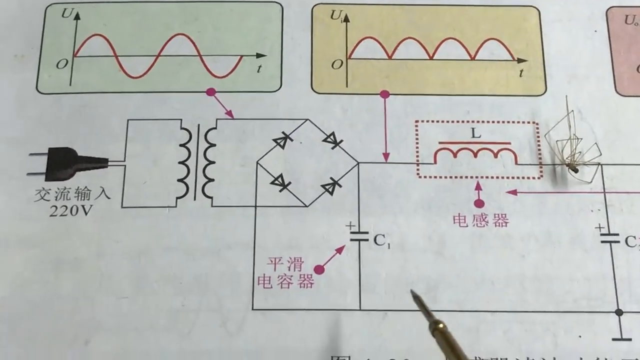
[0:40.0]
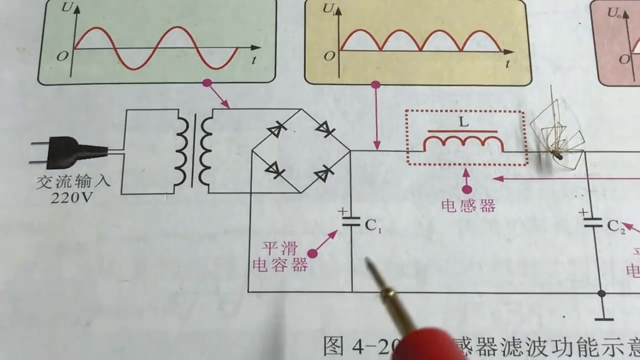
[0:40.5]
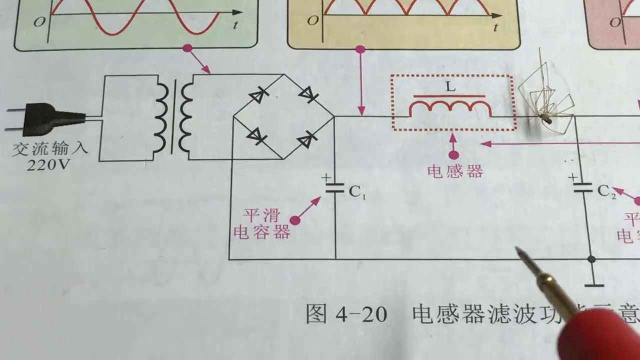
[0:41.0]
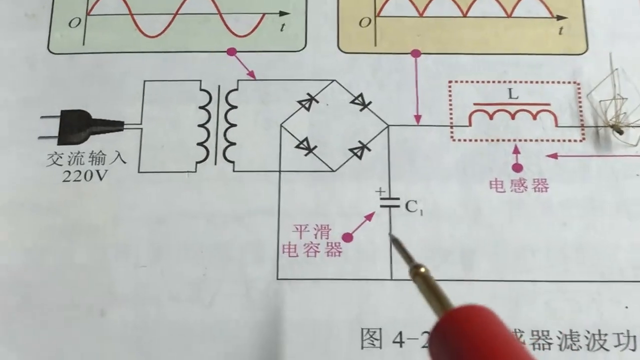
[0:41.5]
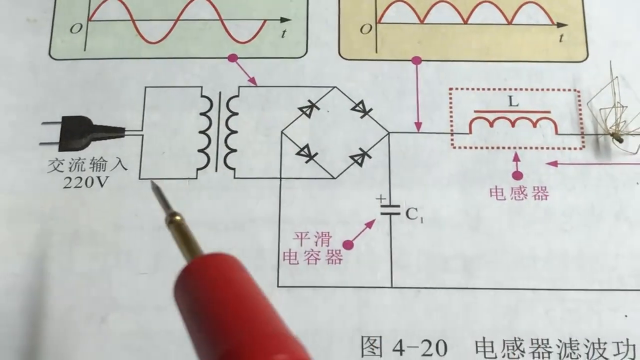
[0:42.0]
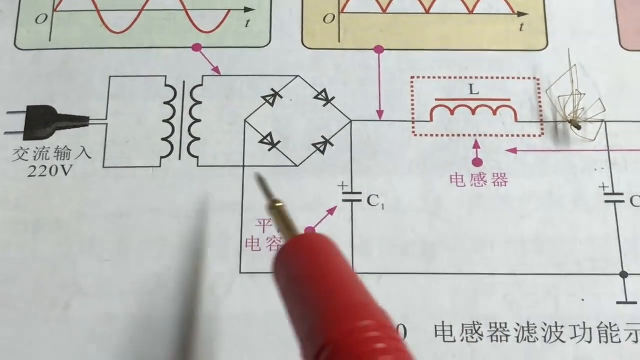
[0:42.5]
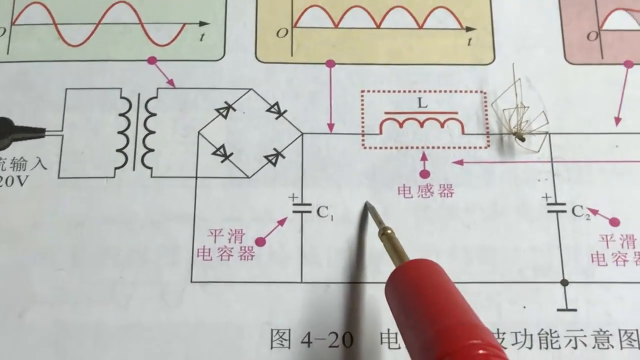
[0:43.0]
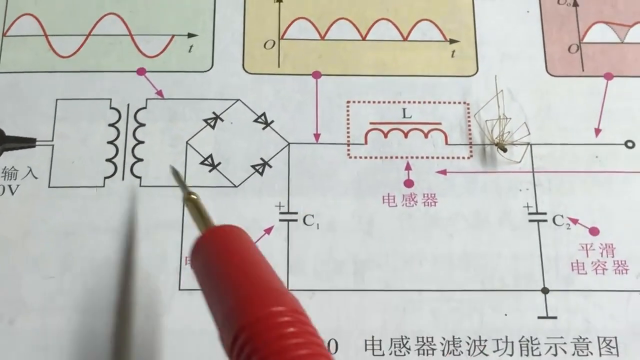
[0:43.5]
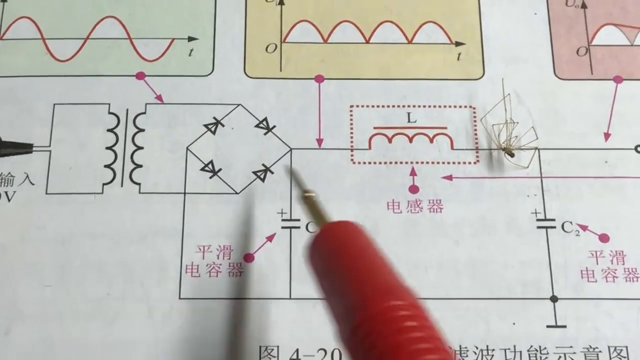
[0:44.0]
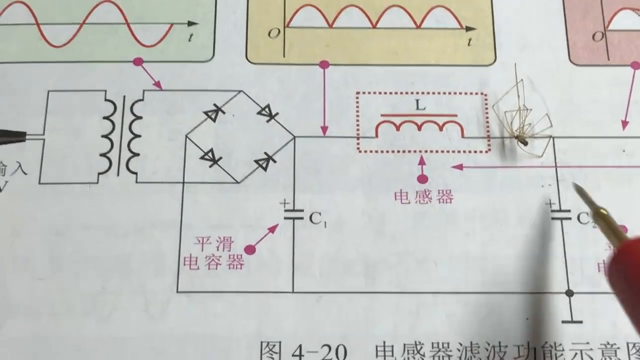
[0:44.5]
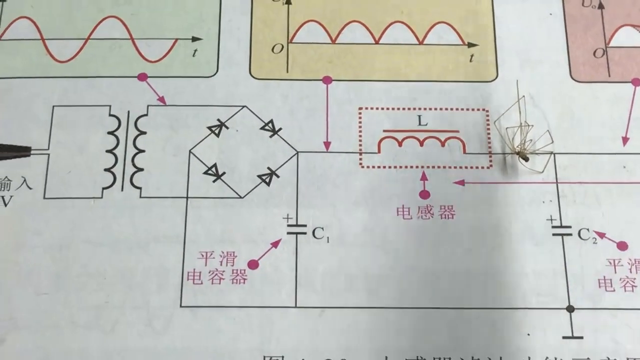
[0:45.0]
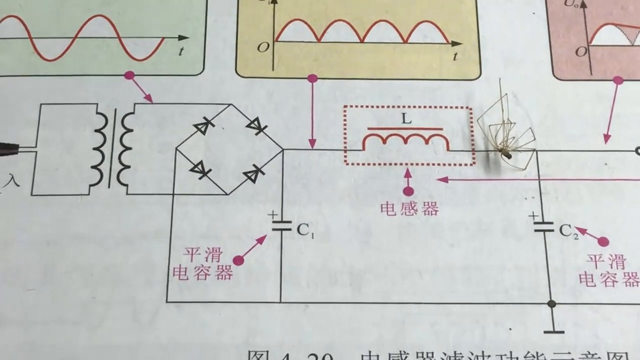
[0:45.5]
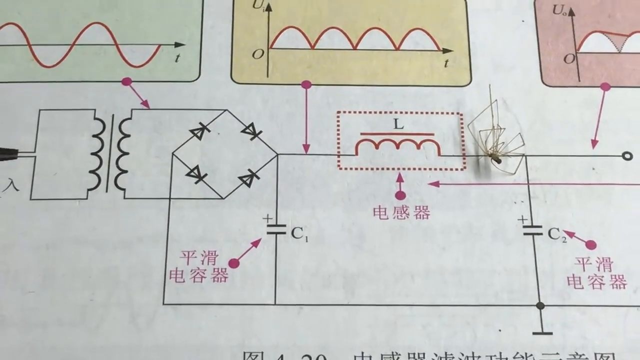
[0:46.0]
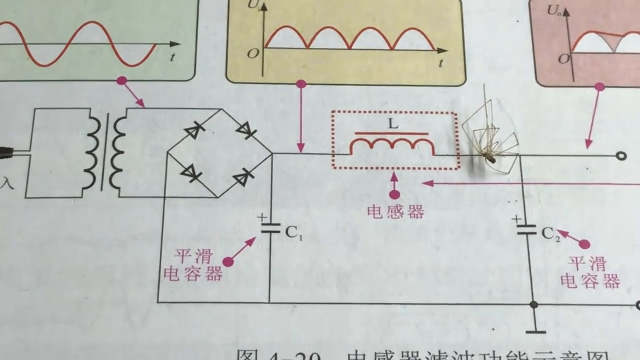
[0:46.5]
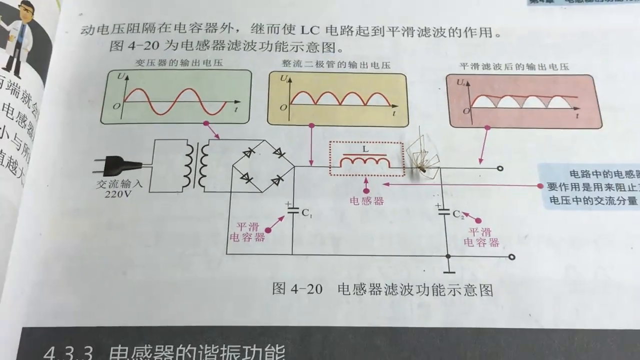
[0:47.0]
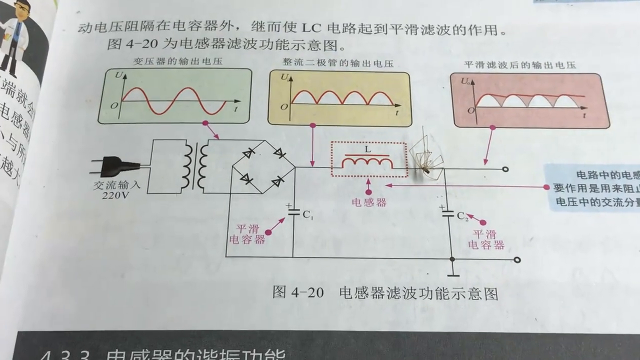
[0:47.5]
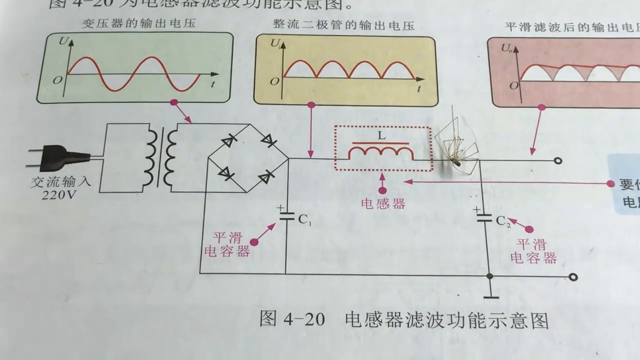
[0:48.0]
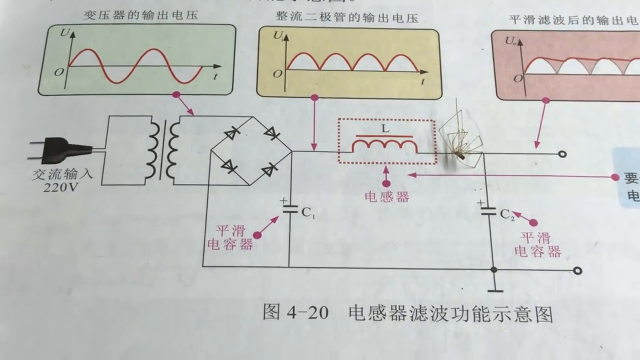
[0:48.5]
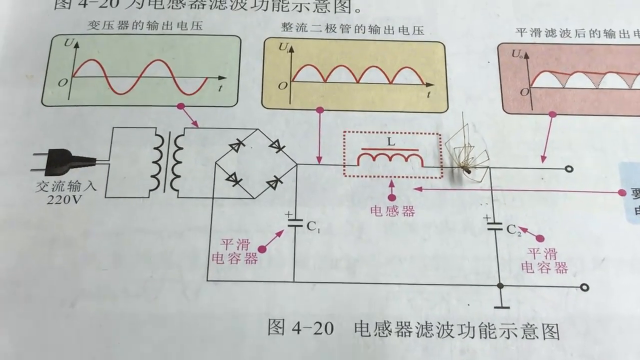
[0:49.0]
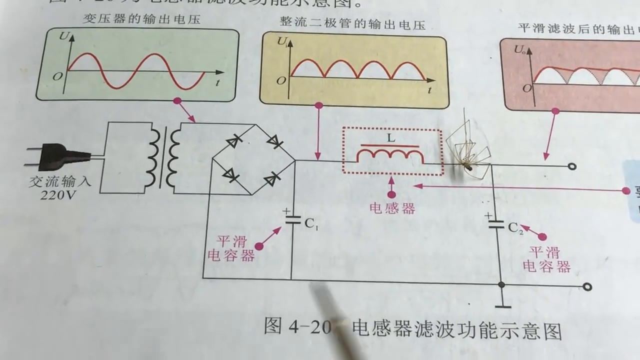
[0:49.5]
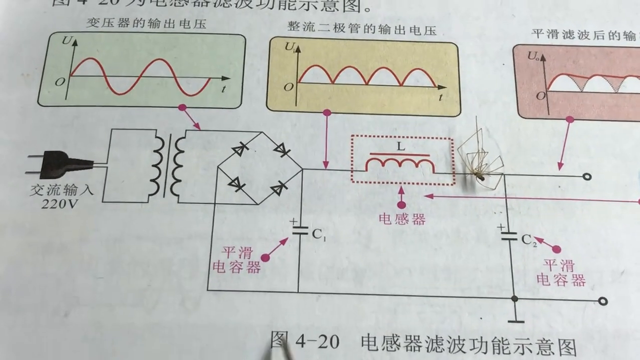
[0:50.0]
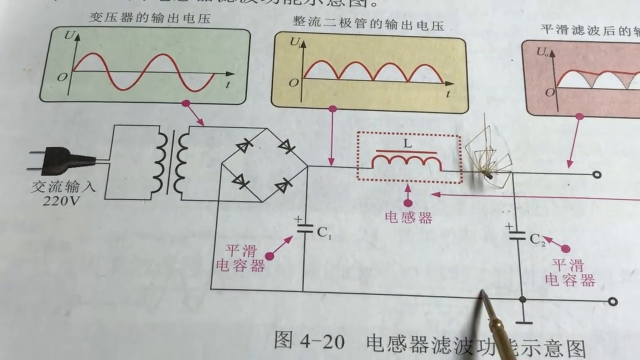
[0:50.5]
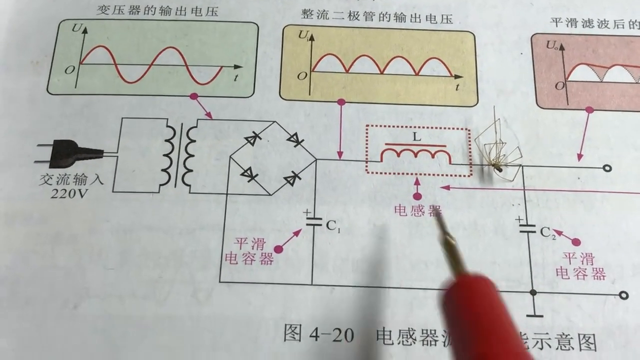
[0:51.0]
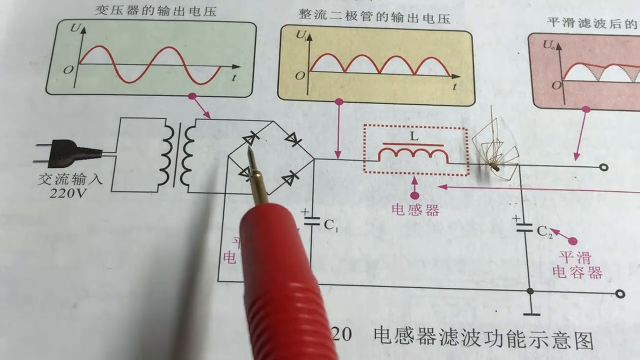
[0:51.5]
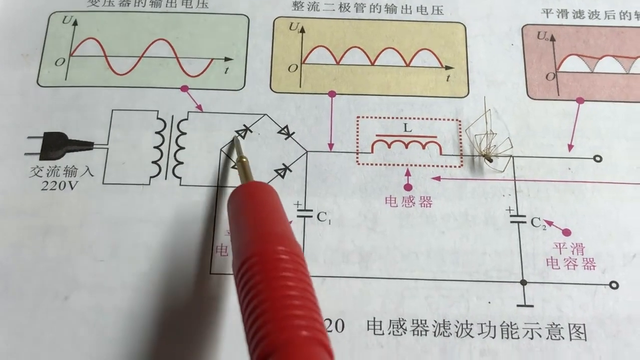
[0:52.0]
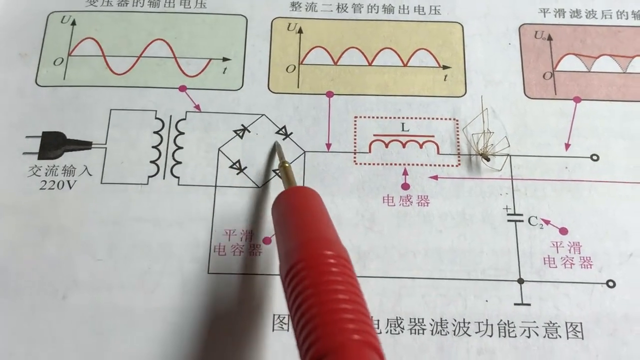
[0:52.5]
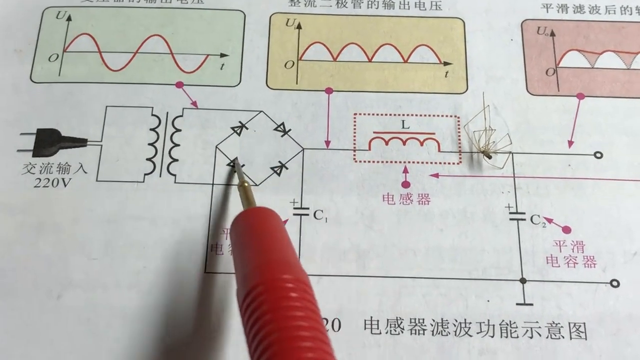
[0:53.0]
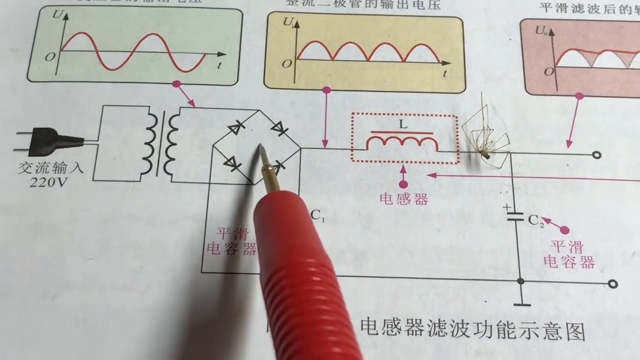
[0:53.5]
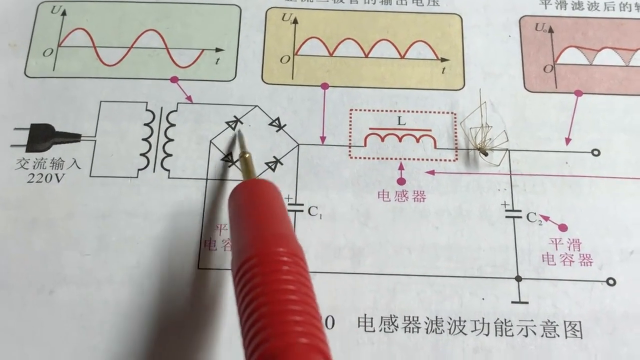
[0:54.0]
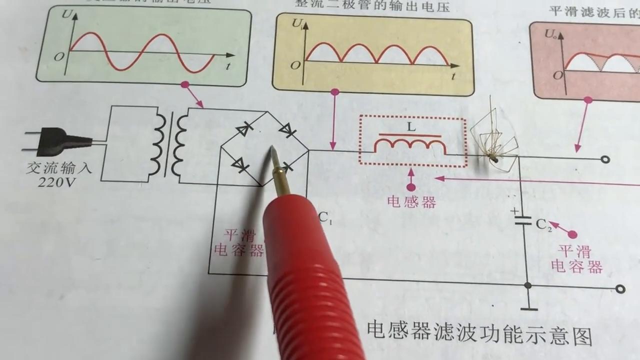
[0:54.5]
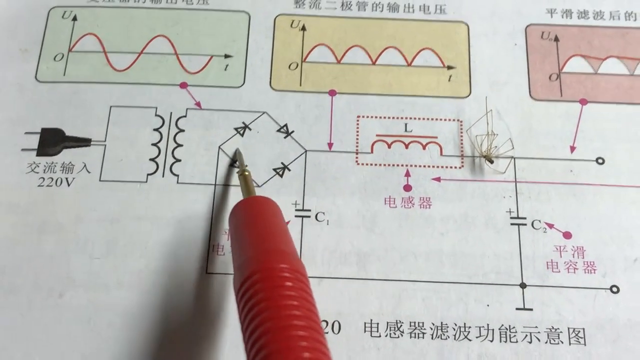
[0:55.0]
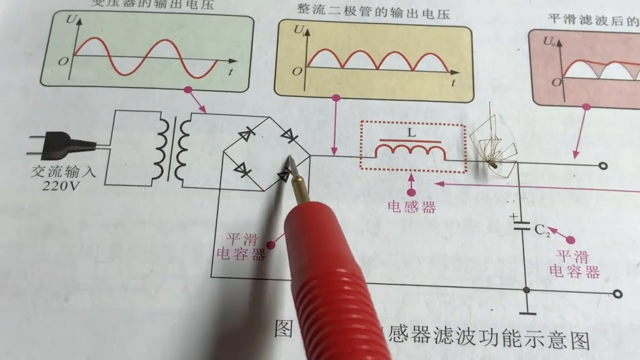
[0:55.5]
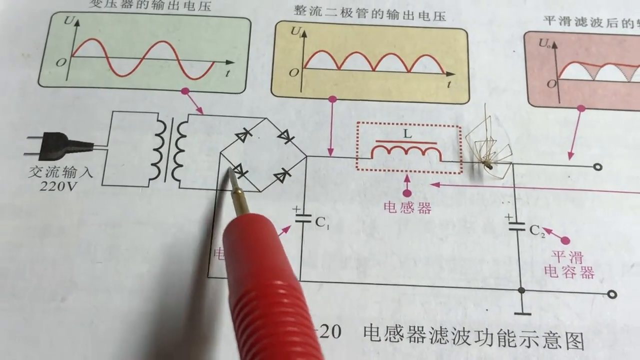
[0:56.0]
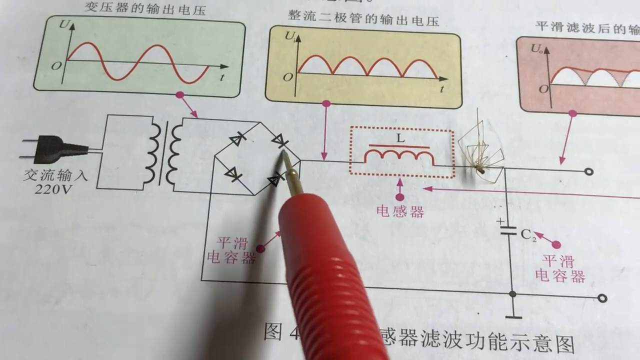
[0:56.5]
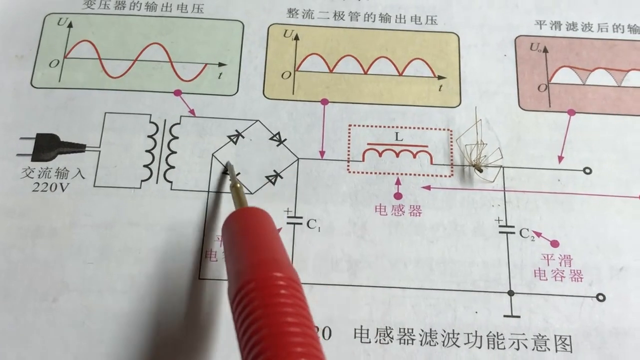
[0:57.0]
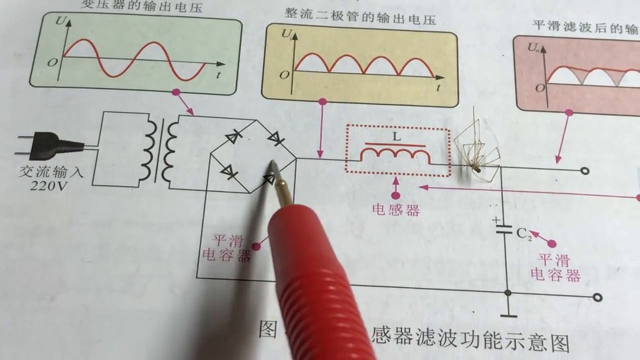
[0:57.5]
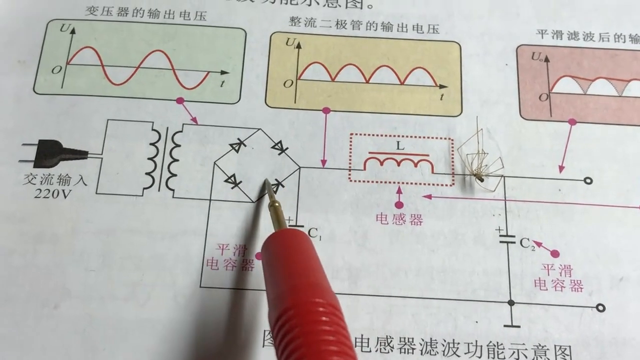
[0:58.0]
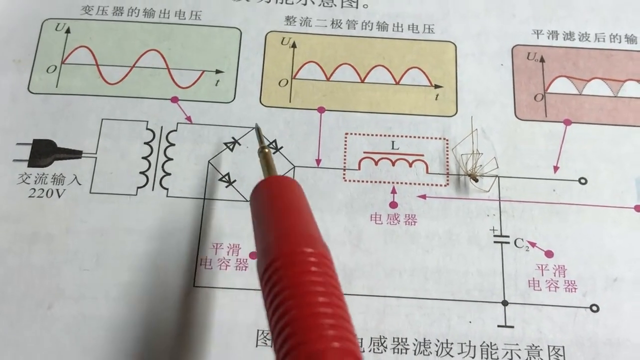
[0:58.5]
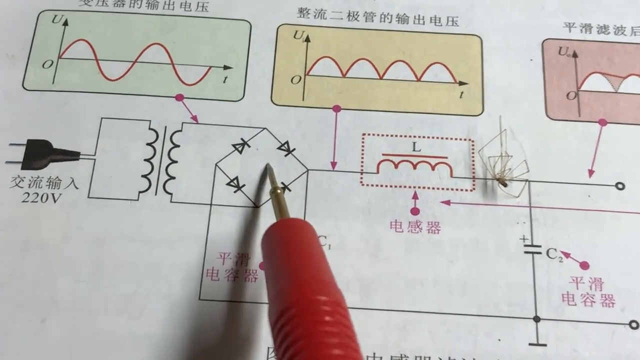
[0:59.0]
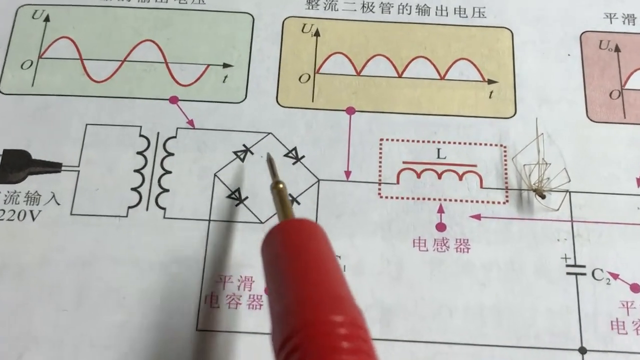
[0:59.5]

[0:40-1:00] A close-up shows a sort of diagram or schematic made of black lines connected together with different shapes. There is an illustration of an outlet with "220V" below it and Chinese kanji characters above that, and some sort of red parts are also on the diagram. The camera zooms out to show more of the page, with more kanji characters and green, yellow, and red boxes, squares that seem to point to things on the diagram, along with other parts of the diagram. A dead spider with its legs curled up is on the page, and to the right is a blue square with some writing in it. A sort of screwdriver or little pointer, golden with a red sort of base, points to different things on the diagram.